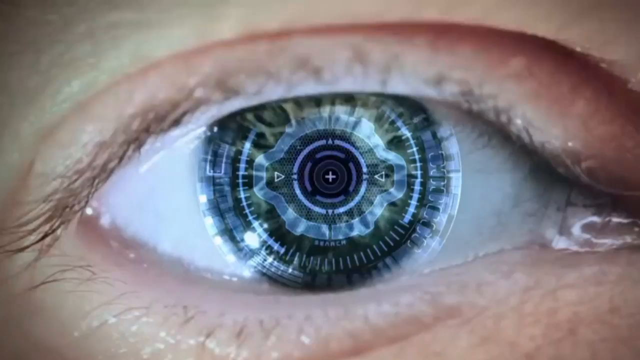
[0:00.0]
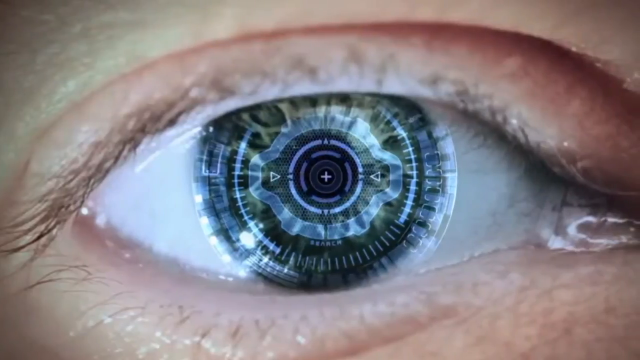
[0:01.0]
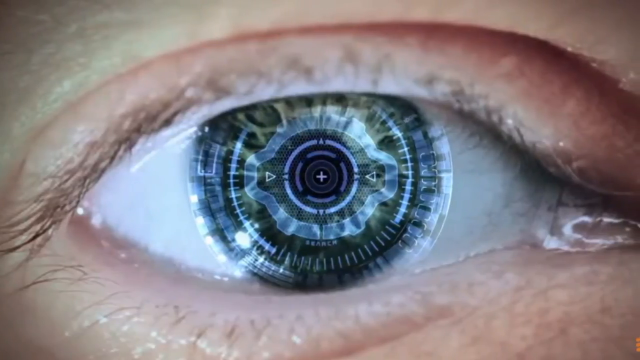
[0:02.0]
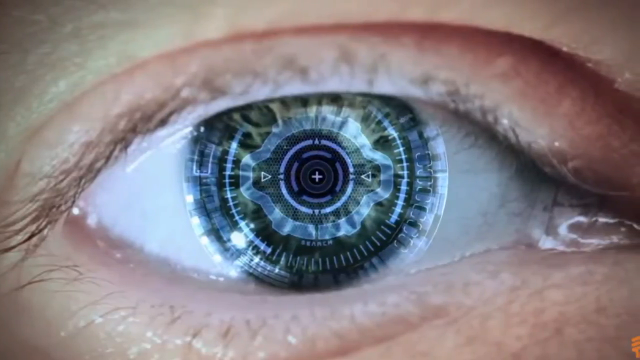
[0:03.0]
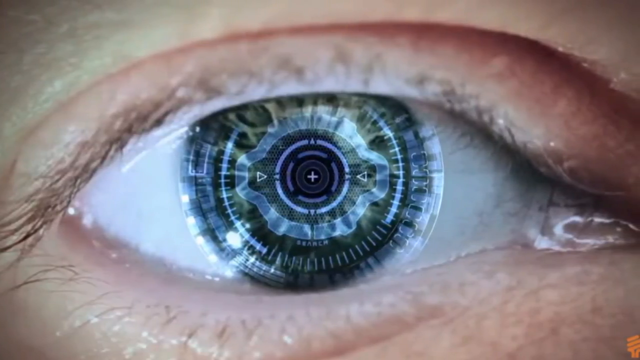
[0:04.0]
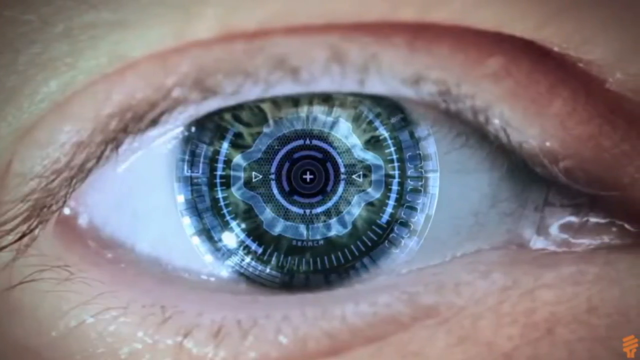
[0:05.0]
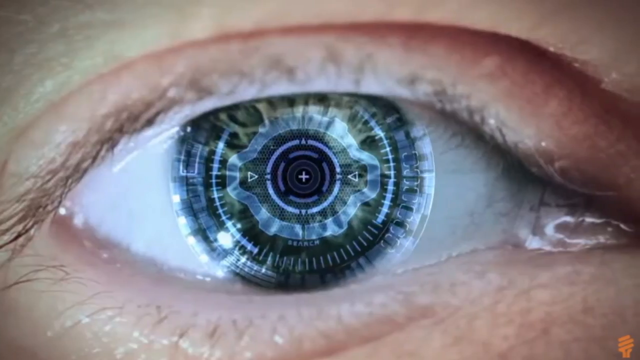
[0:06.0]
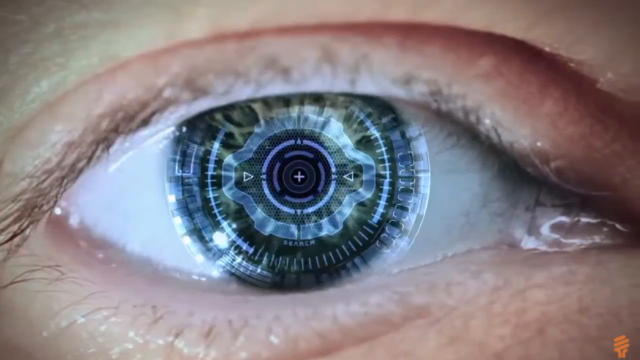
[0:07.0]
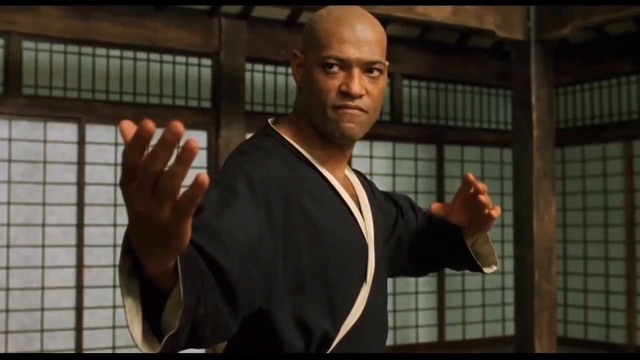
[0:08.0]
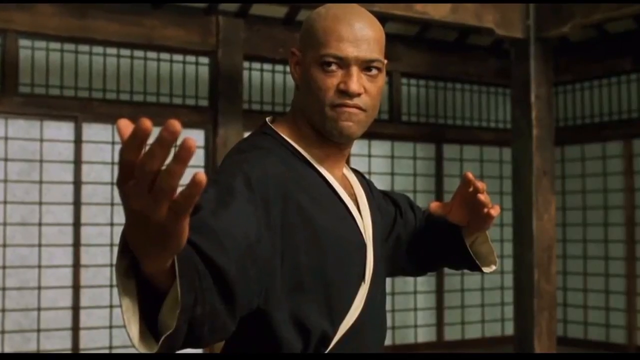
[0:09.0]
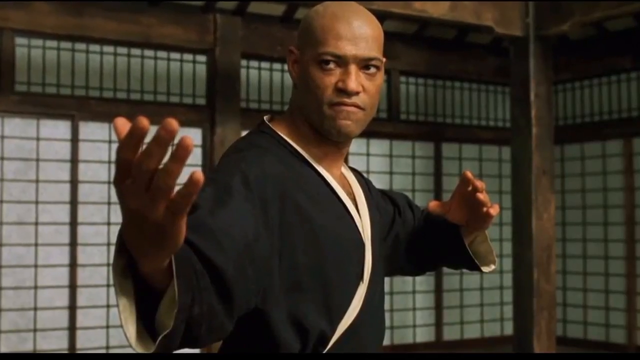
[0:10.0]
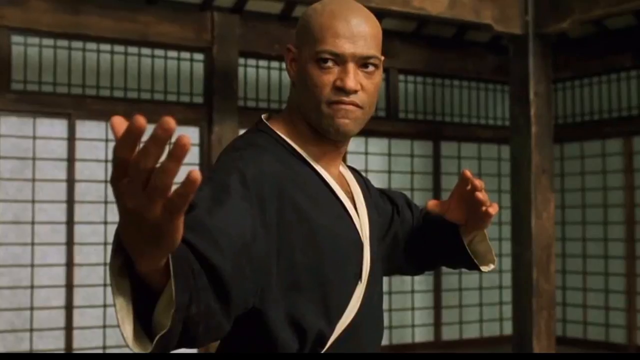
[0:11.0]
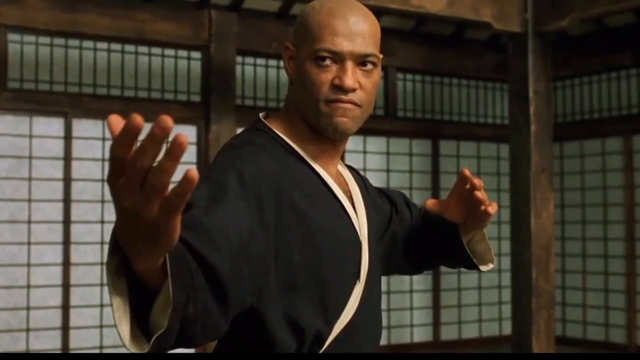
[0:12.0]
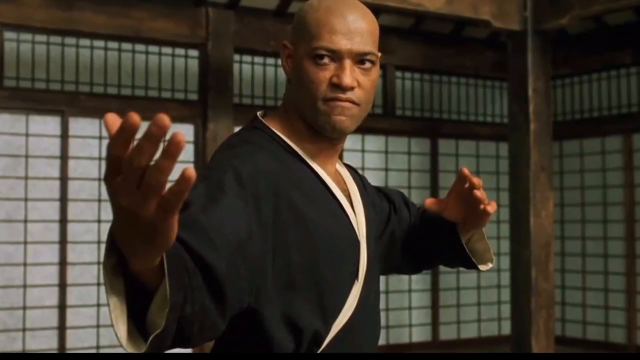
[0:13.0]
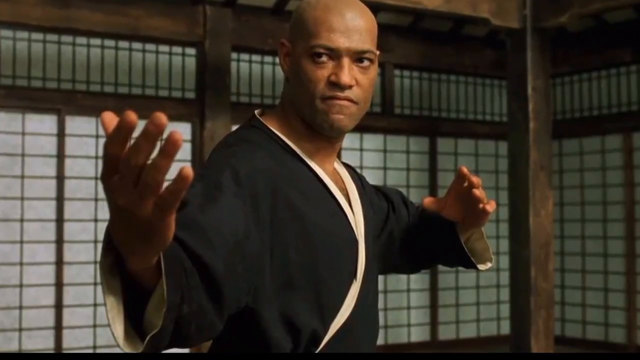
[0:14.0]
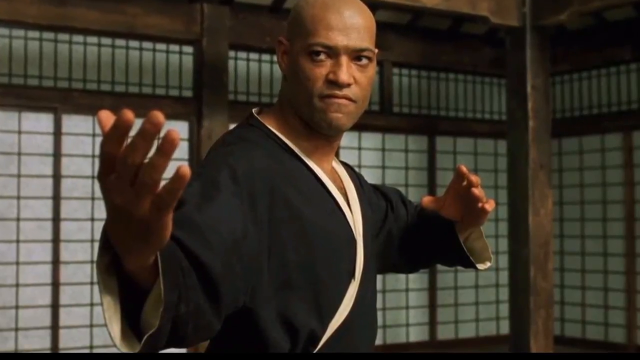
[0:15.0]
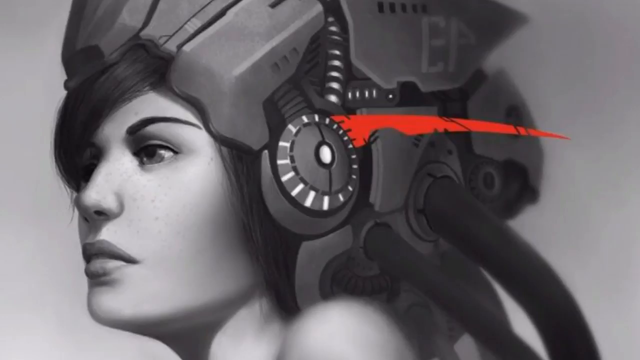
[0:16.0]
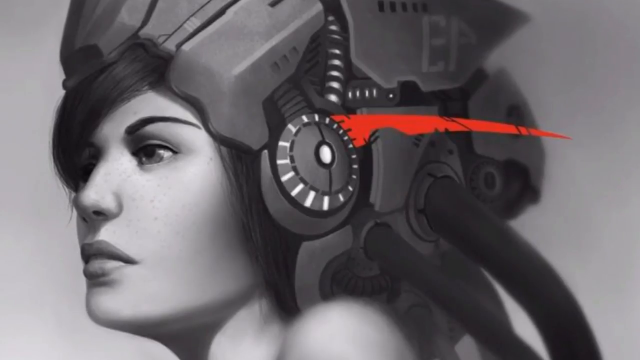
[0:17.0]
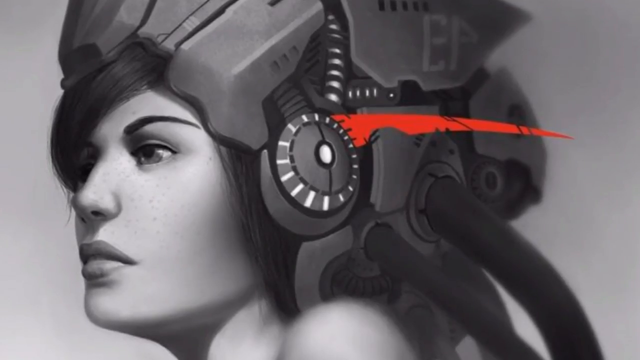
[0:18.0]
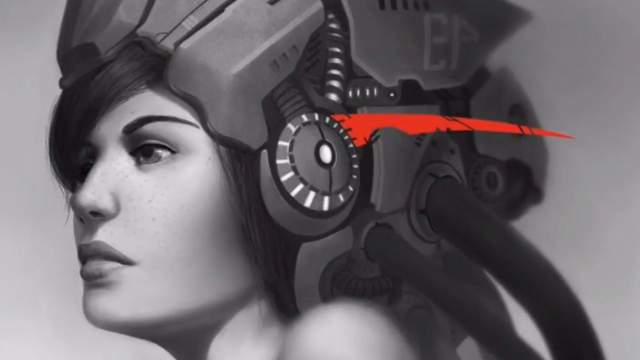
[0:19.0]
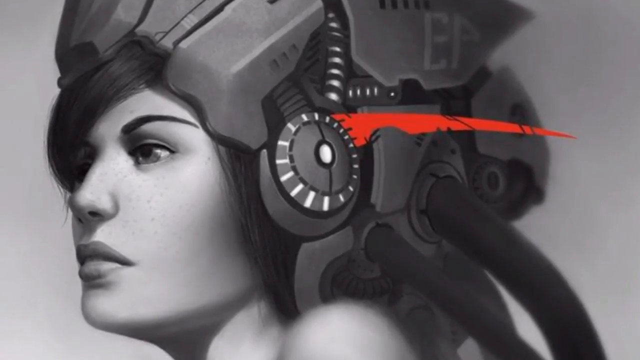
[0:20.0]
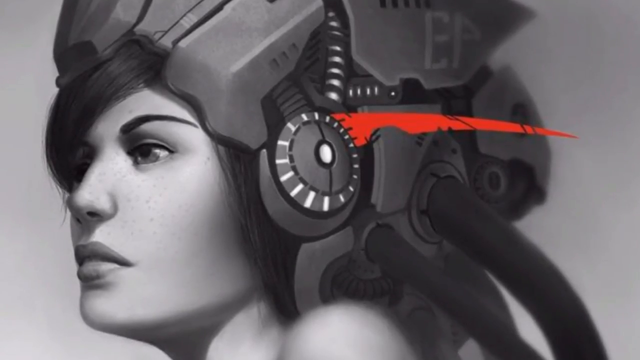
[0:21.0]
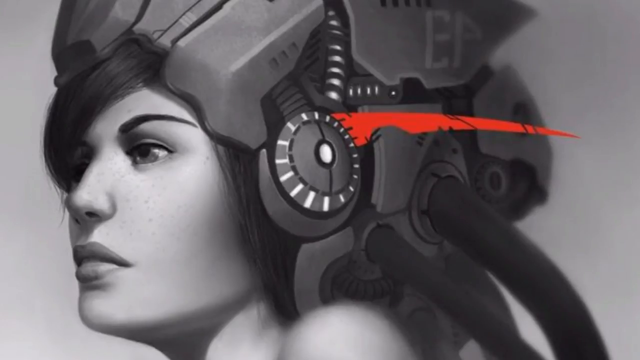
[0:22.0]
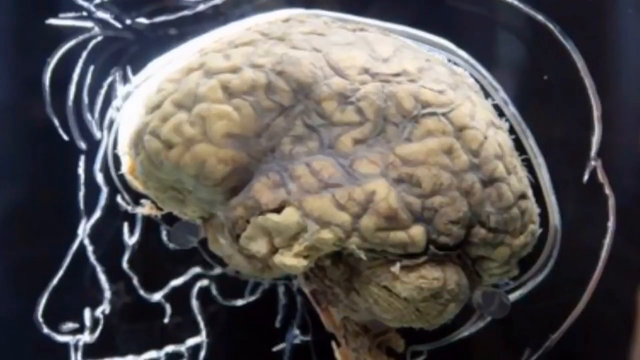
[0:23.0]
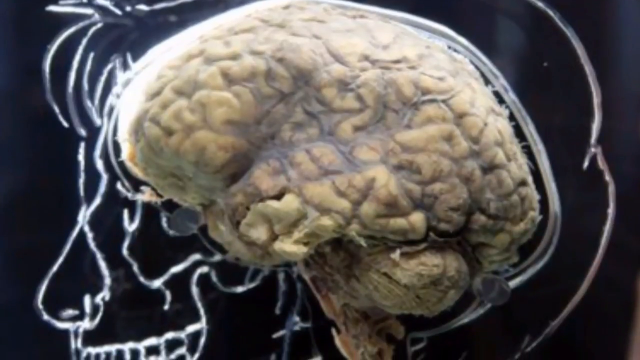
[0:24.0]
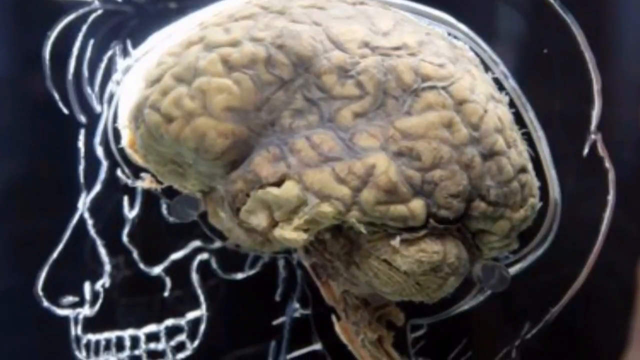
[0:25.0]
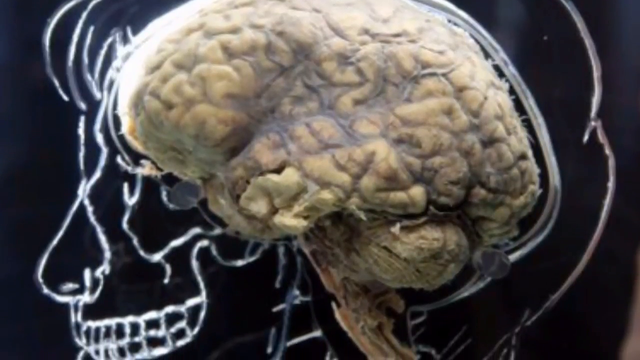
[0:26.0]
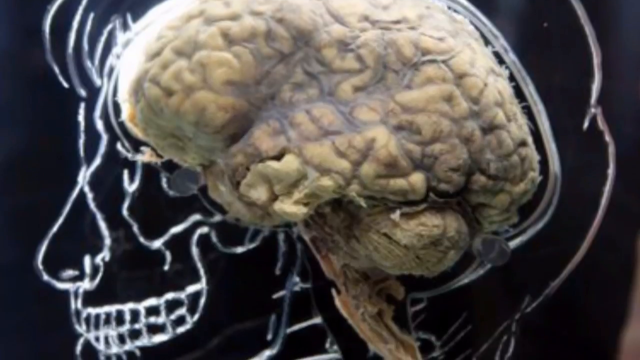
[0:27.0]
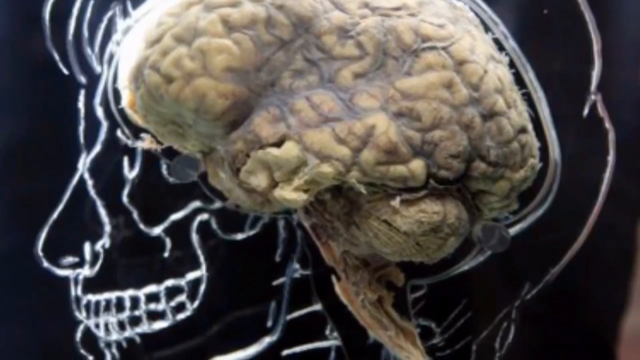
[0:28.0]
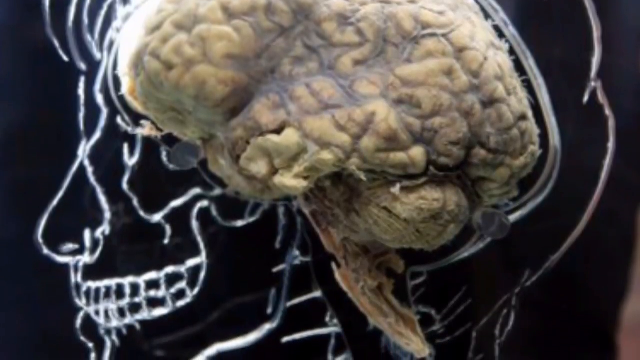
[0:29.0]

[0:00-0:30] The video opens on a very zoomed-in view of a human eye that looks like it has technology attached to it: a blue, lens-like element with a plus sign in the middle, with a definitely futuristic look. The camera rotates very slowly to the right, and the person's eyelid comes into view as well. The next image shows a person with a somewhat darker skin complexion who looks like they are practicing a martial art inside a dojo, wearing a black robe with a white stripe in the center. His right hand is out in front of him and his left hand is back, apparently positioned as if he is trying to absorb something. Next comes a woman with a machine attached to her head, followed by an image of a brain that takes up the rest of the shot.